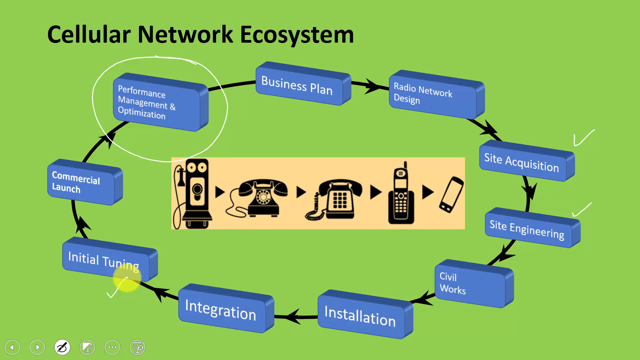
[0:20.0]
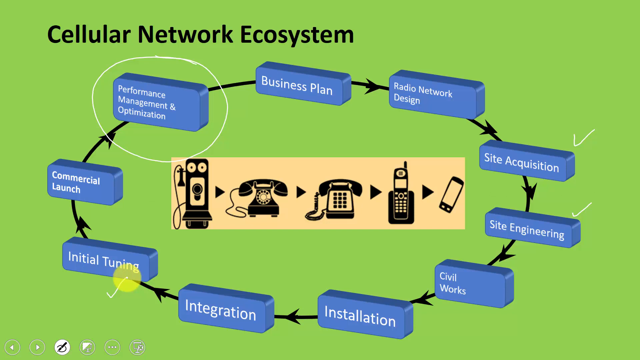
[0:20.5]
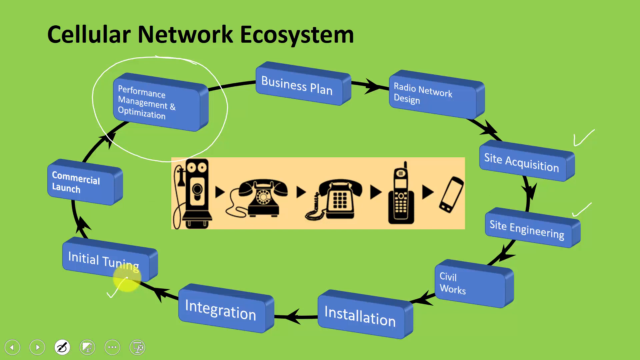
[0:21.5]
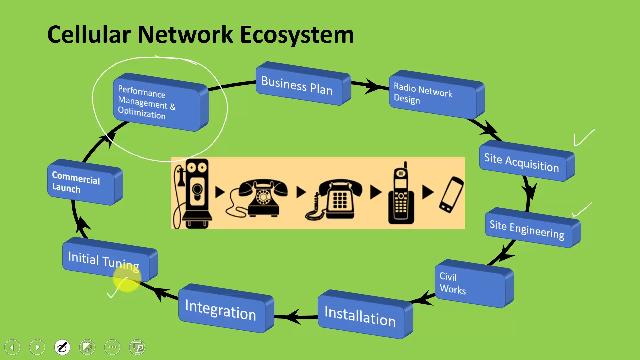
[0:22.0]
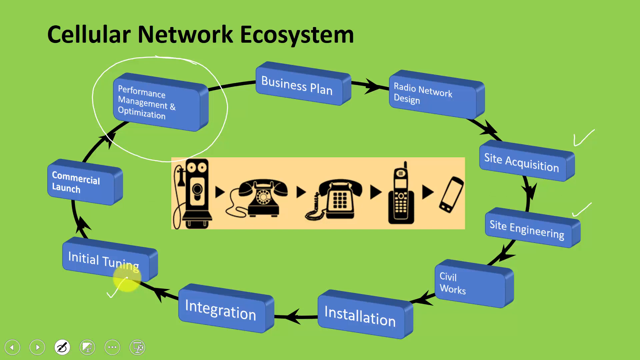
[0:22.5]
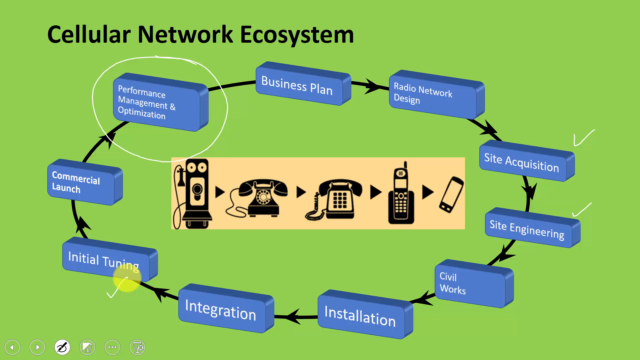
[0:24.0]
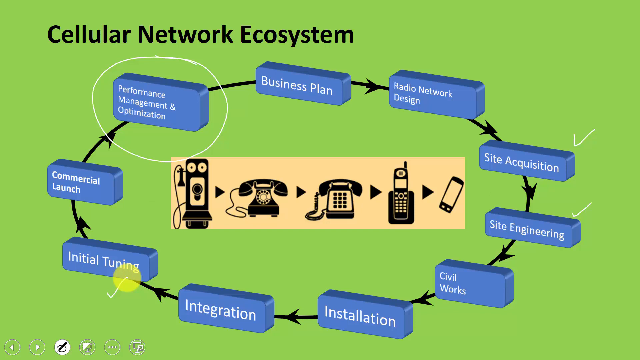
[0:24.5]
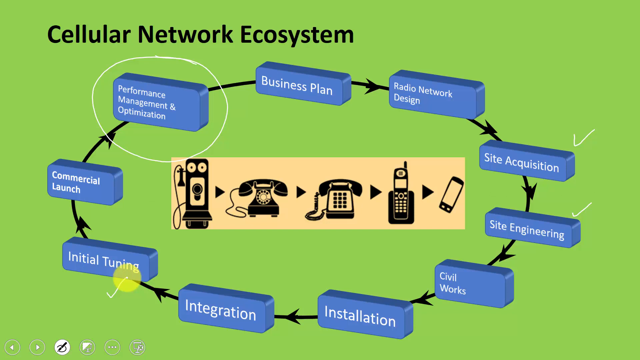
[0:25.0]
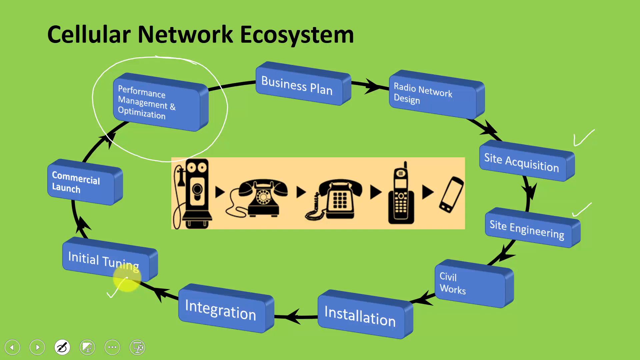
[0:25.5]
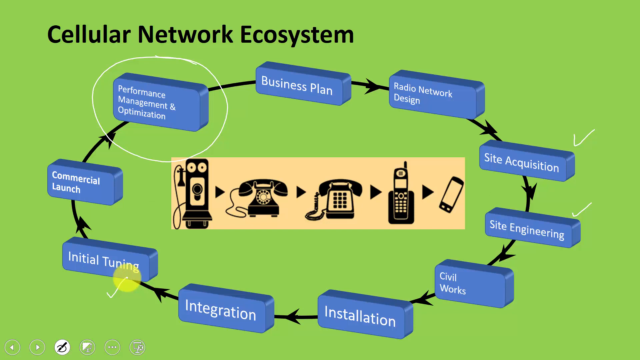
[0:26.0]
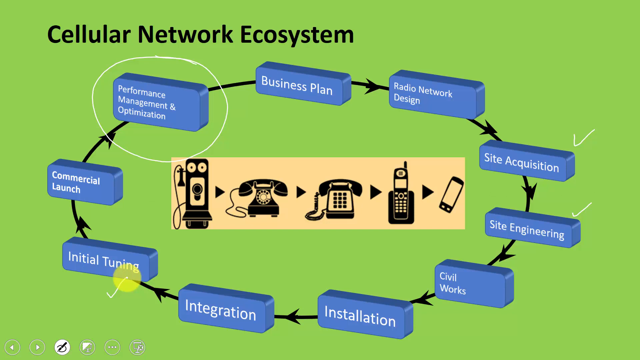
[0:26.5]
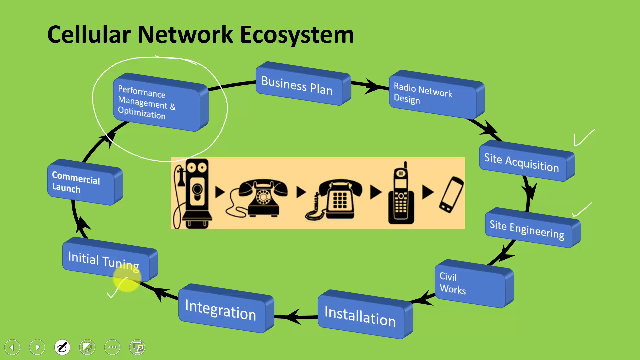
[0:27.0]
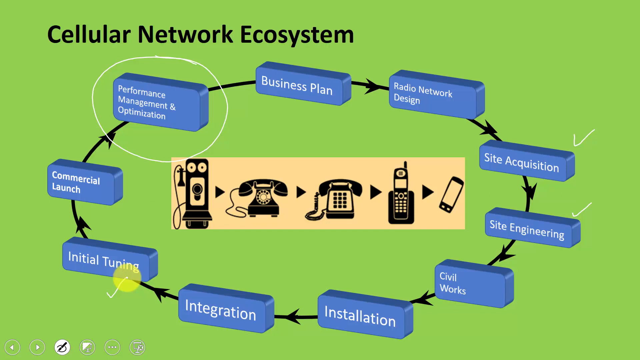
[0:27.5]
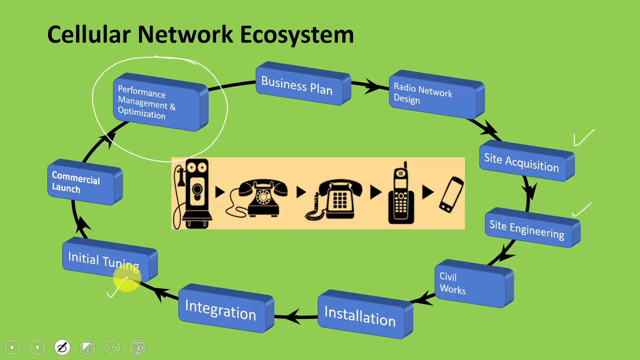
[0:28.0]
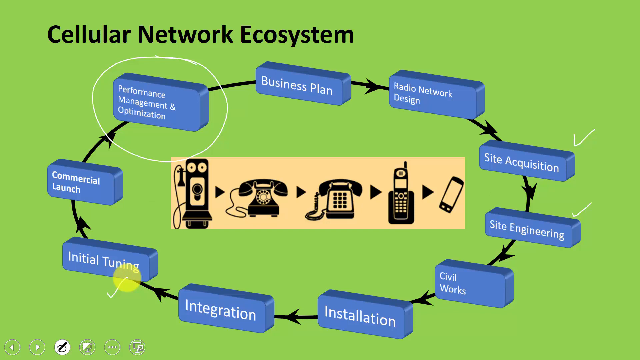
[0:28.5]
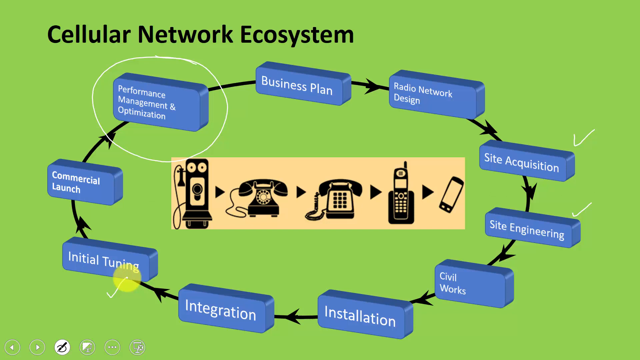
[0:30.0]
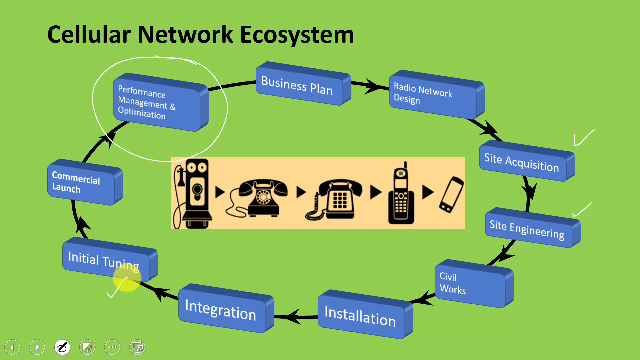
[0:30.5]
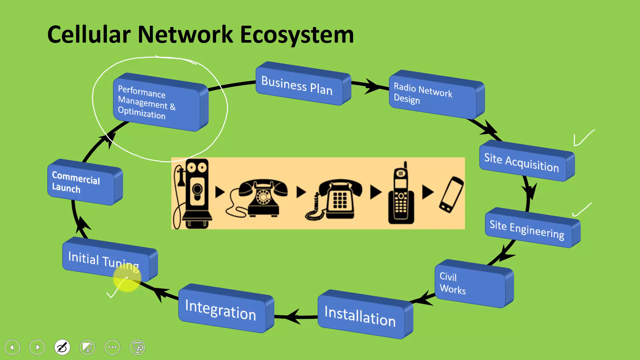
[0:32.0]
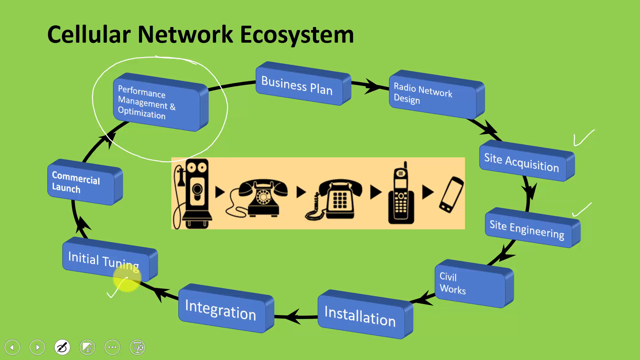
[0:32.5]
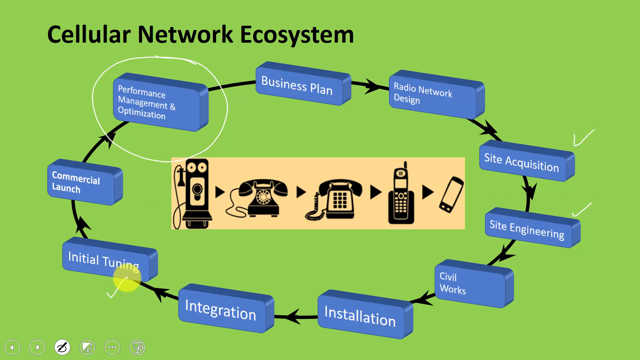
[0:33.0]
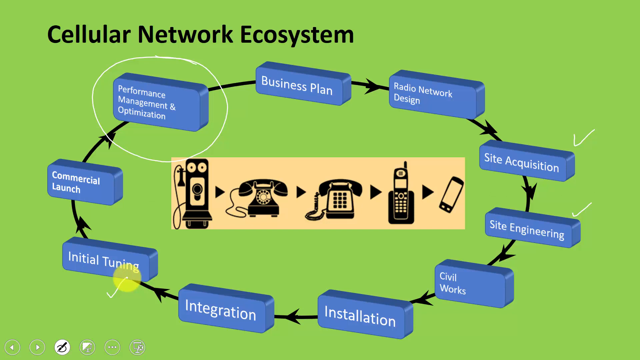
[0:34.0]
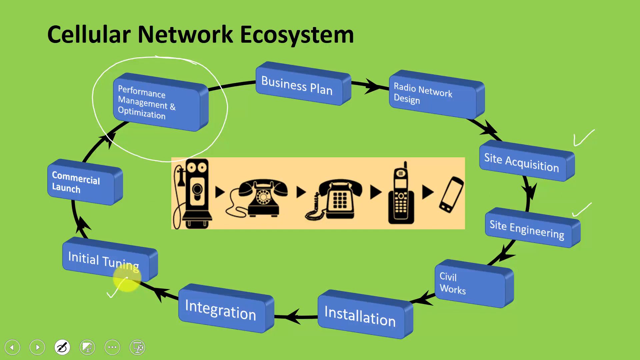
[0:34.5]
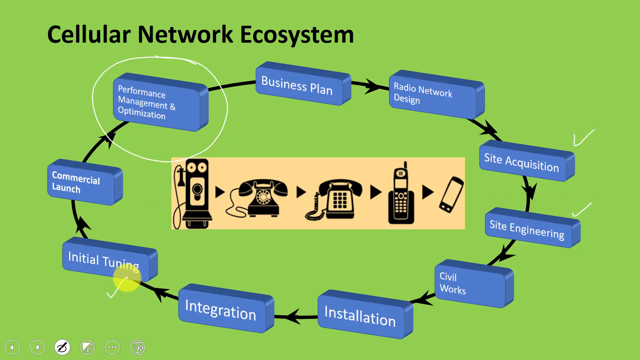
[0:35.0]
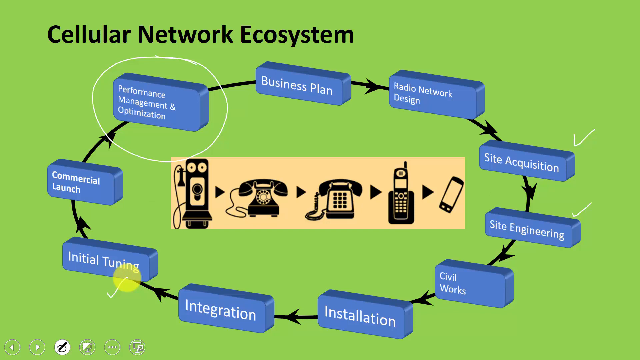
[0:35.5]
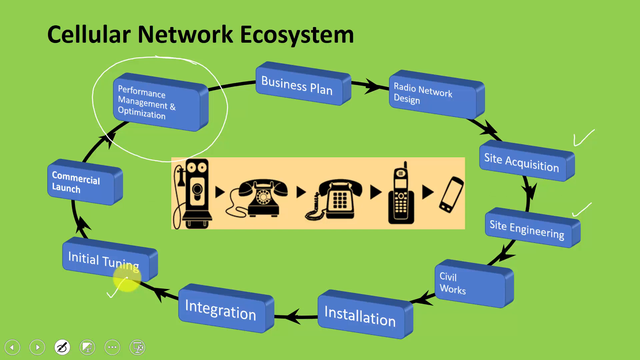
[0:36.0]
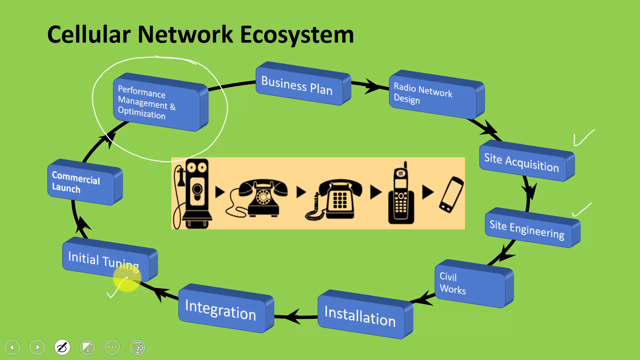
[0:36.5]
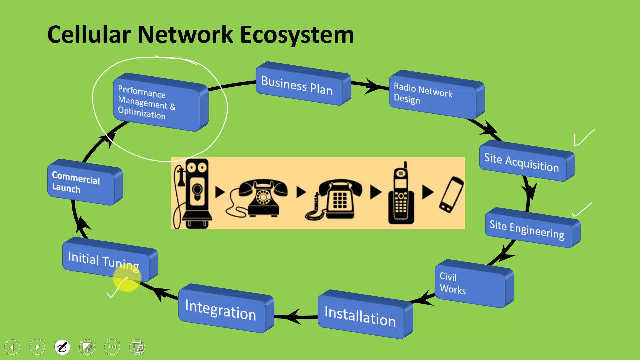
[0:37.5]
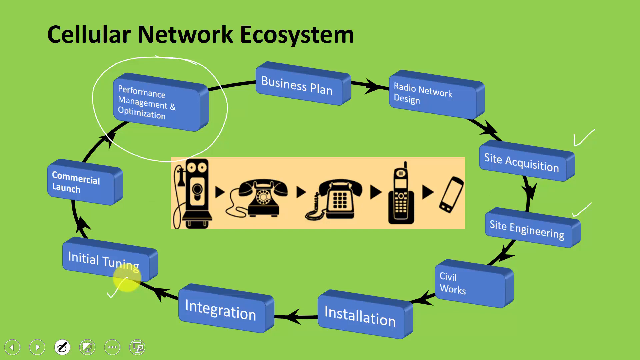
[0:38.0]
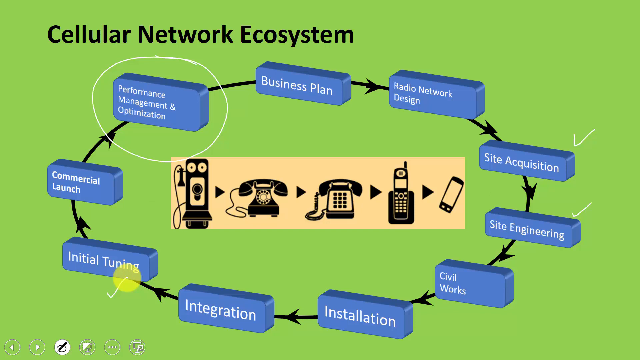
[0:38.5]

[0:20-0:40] Nothing much happens on the slide. It has a green background and a ring of items, each a blue 3D block with words on the front. The blocks are connected by a bending black line with arrows on it, and the arrows are poorly placed and look off. Performance management and optimization is circled. The sequence starts with business plan, which has an arrow to radio network design, then site acquisition (checked), site engineering (also checked), civil works (not checked), installation, integration and initial tuning (checked), with a lighter green circle on top of the end of its check mark. From there it goes to commercial launch and back to performance management and optimization. A yellow sub-background shows the evolution of the telephone from a very old-fashioned phone to a modern cell phone.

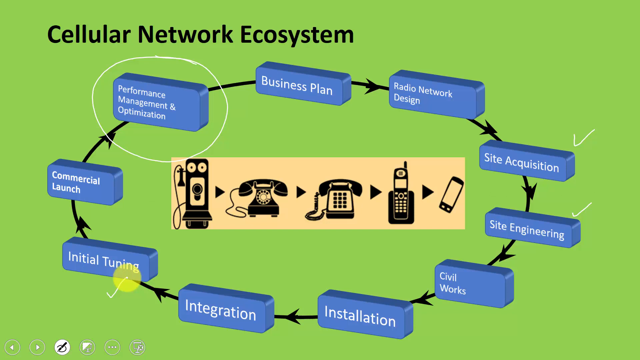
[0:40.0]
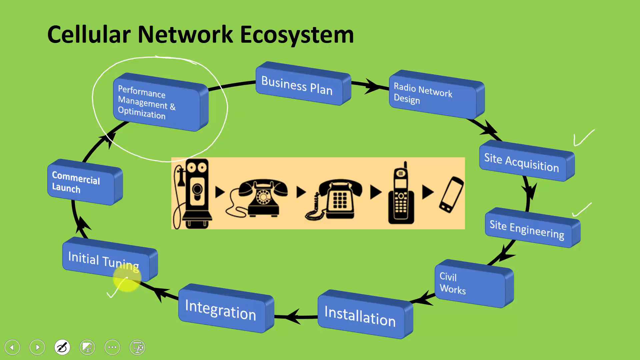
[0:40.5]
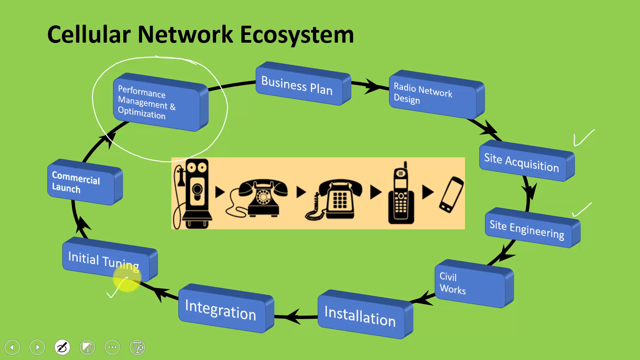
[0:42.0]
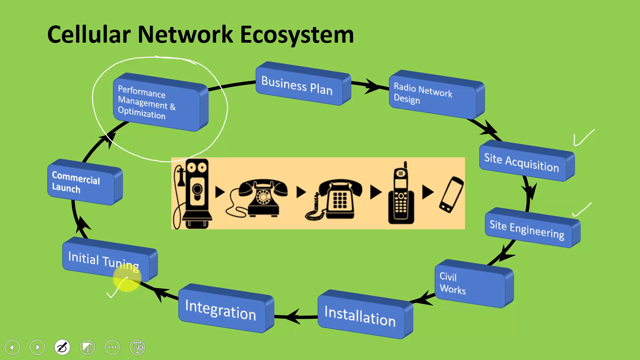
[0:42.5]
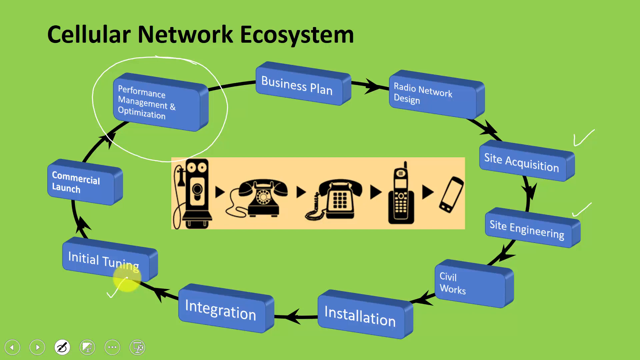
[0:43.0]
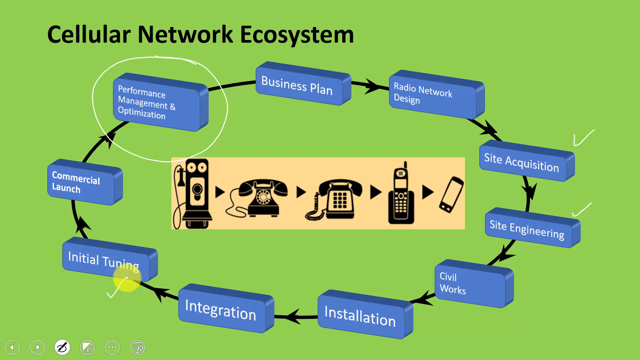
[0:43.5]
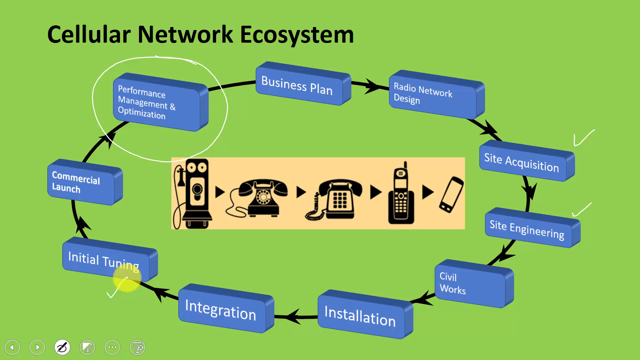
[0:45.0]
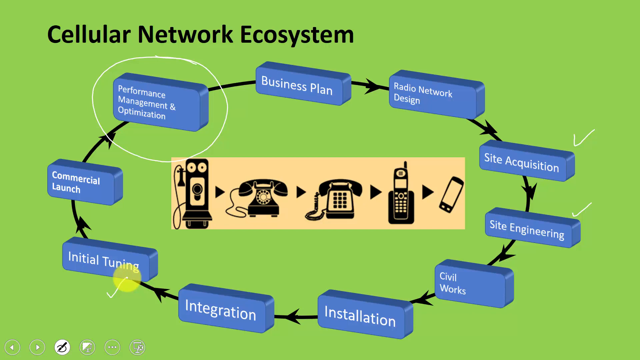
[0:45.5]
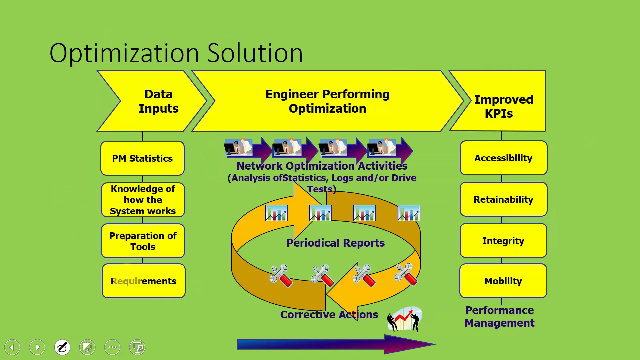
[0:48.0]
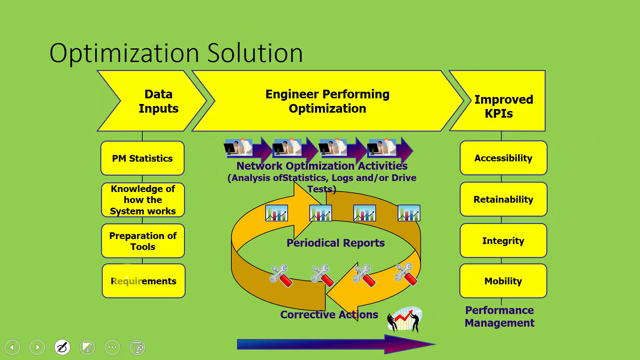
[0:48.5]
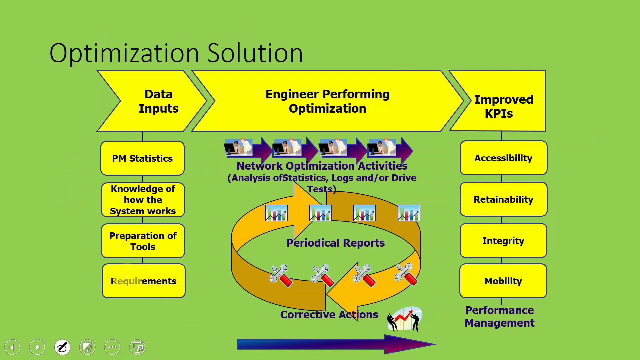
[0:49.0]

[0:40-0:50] After that slide comes a very brief one titled "Optimization Solutions" in black letters. It has a flowchart-like layout running from data inputs through an engineer performing optimization to improved KPIs. The data inputs are PM statistics, knowledge of how the system works, and preparation of tools and requirements. The improved KPIs are accessibility, retainability, integrity and mobility, with possibly one more. Two semicircular orange arrows each close their head on the other's tail. The slide is static. It then moves to RAN services, showing drive test and radio network statistics.